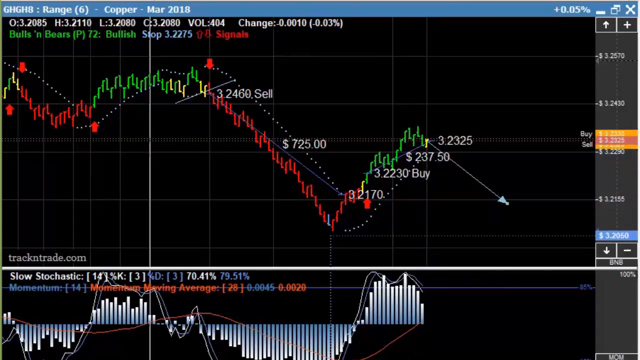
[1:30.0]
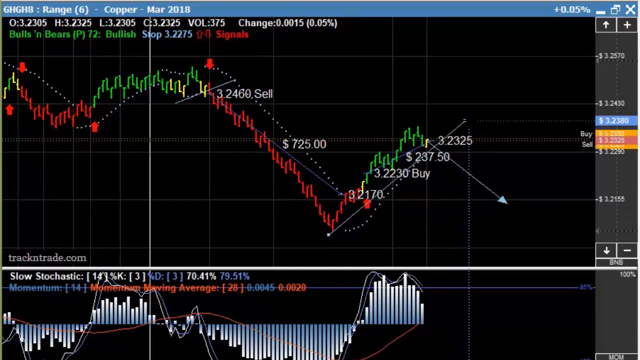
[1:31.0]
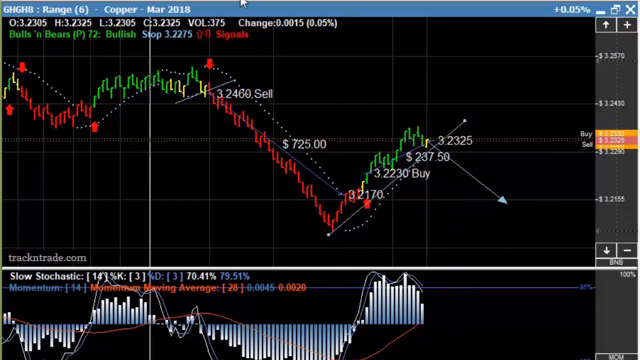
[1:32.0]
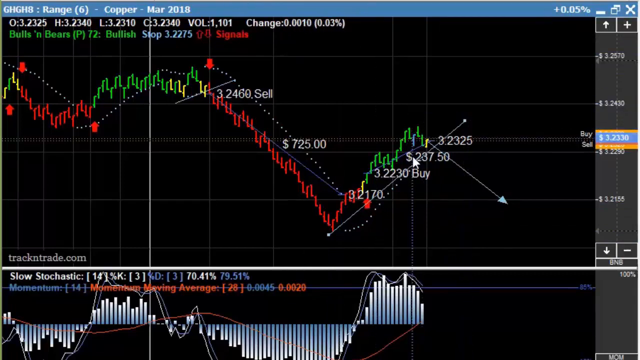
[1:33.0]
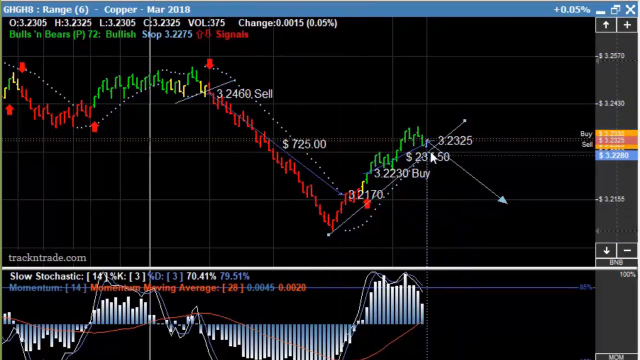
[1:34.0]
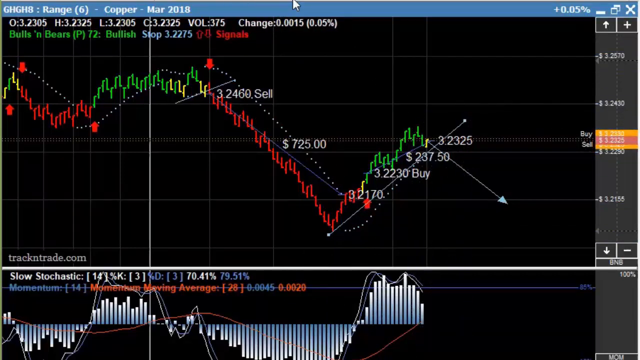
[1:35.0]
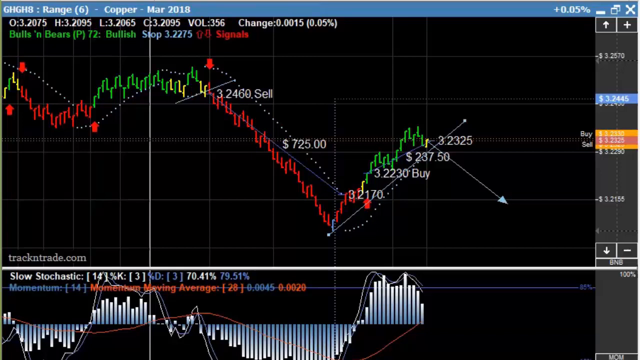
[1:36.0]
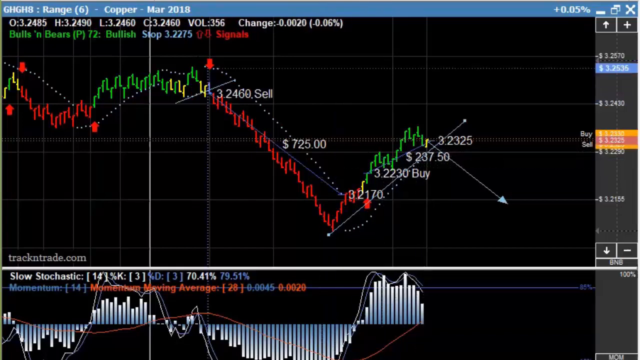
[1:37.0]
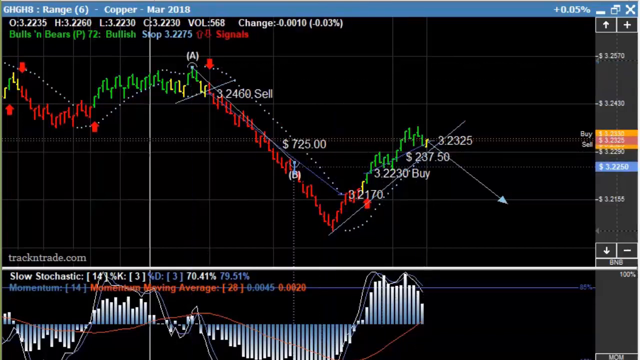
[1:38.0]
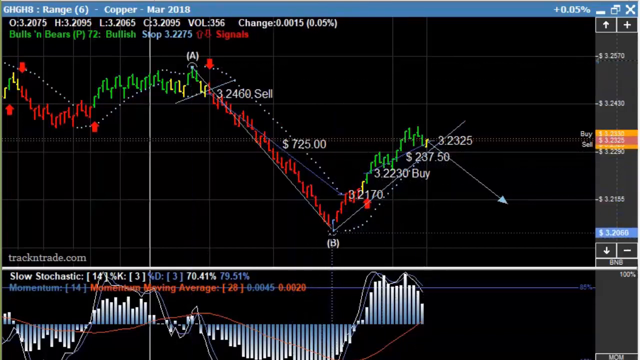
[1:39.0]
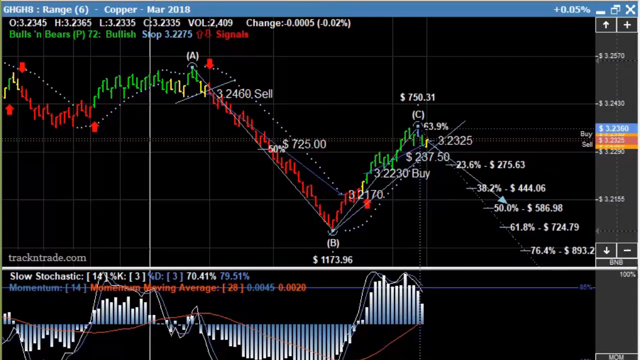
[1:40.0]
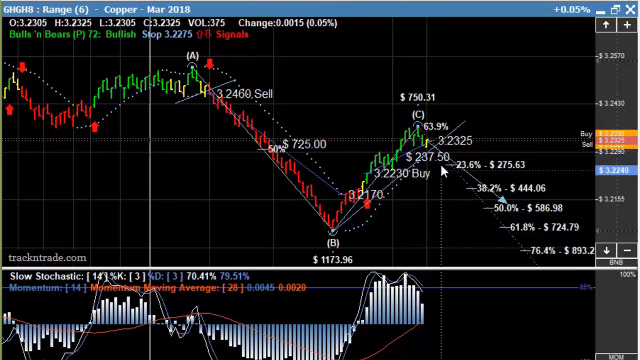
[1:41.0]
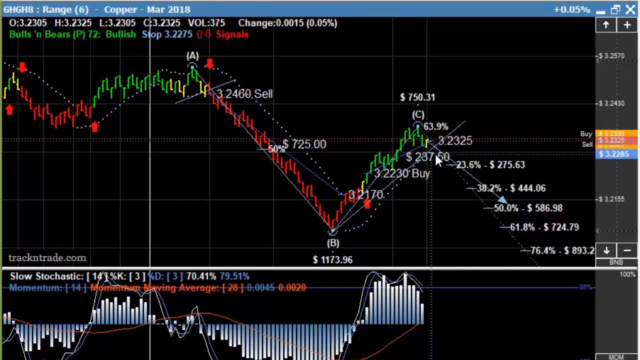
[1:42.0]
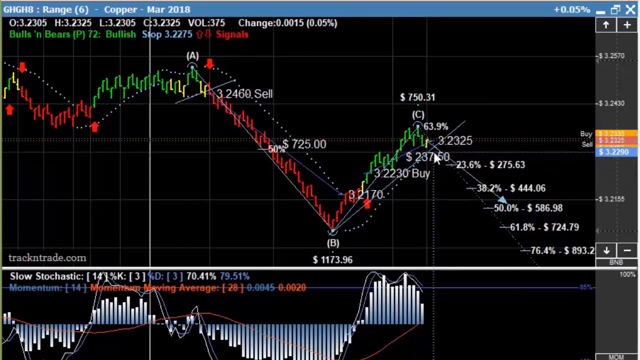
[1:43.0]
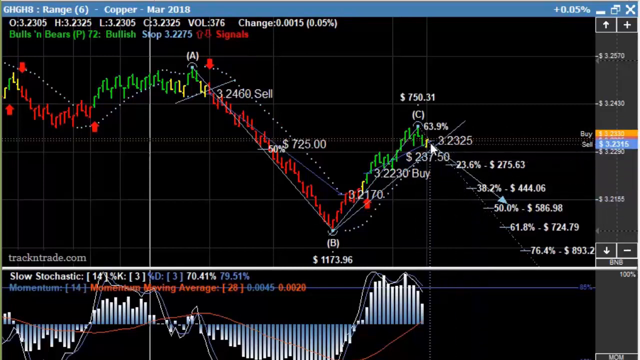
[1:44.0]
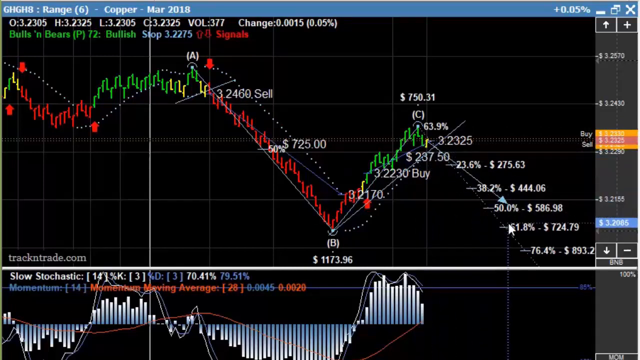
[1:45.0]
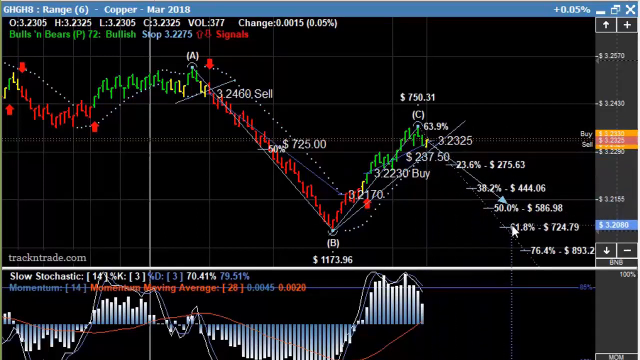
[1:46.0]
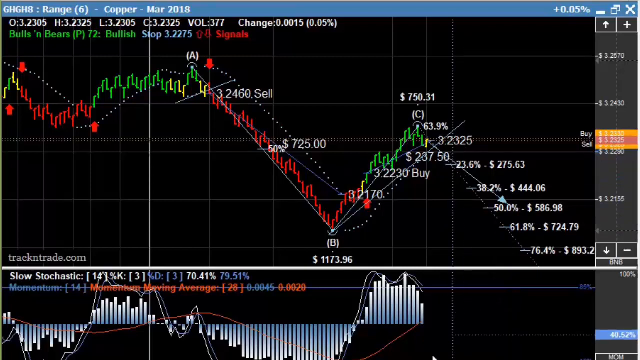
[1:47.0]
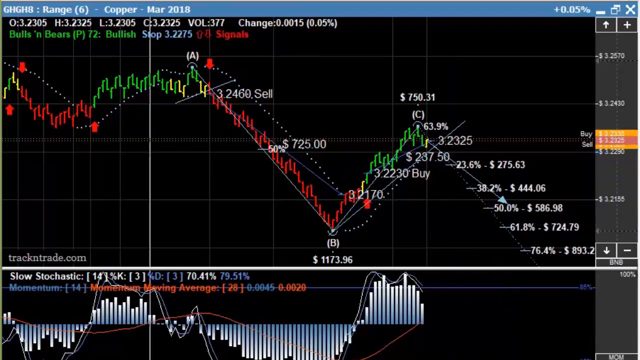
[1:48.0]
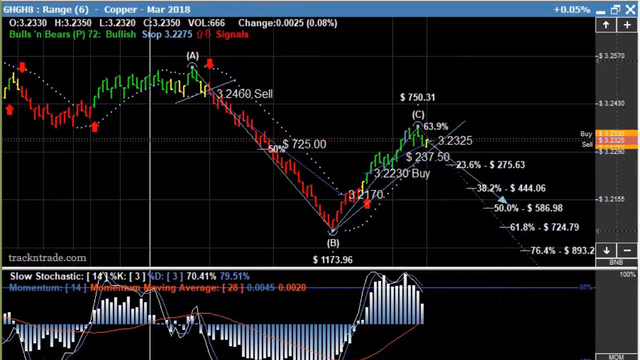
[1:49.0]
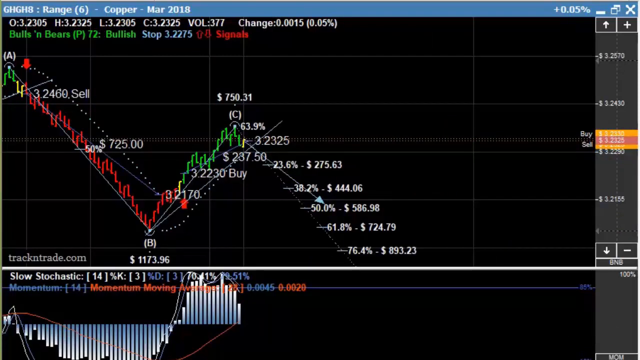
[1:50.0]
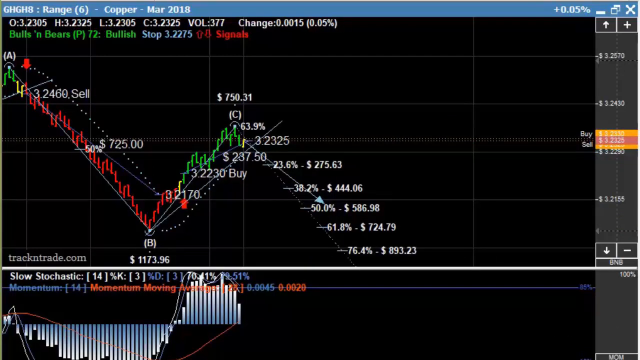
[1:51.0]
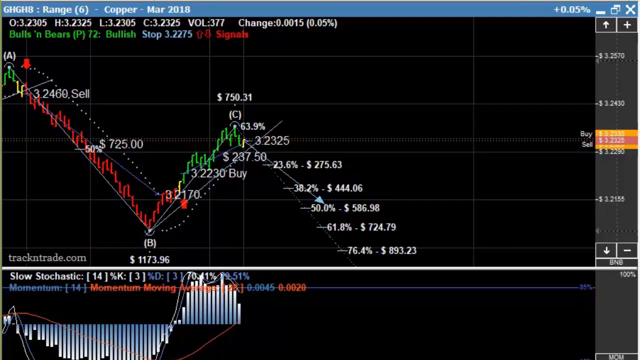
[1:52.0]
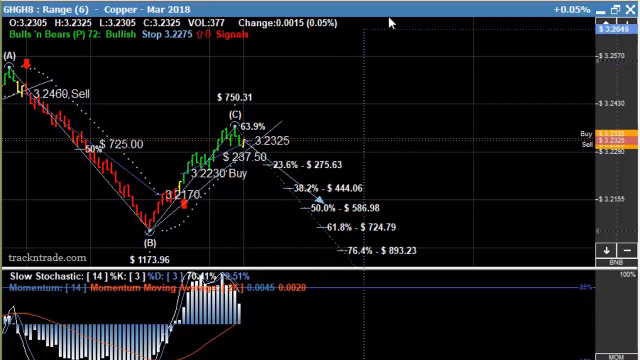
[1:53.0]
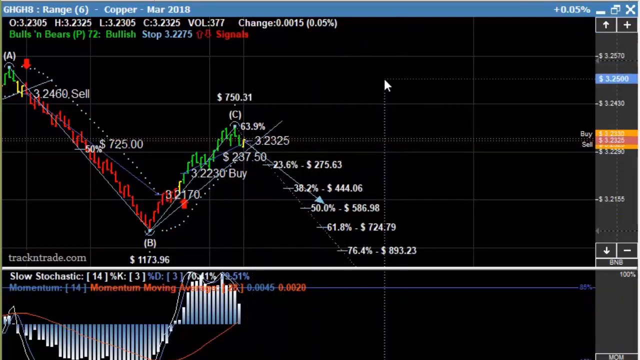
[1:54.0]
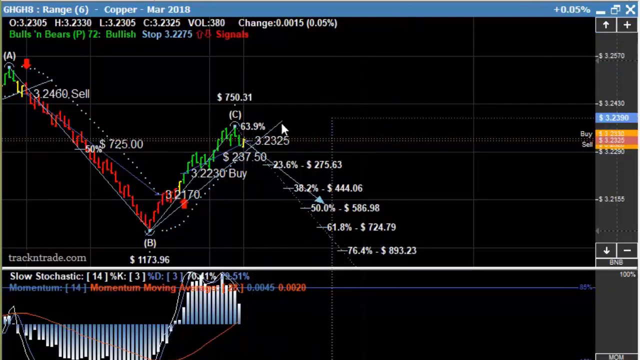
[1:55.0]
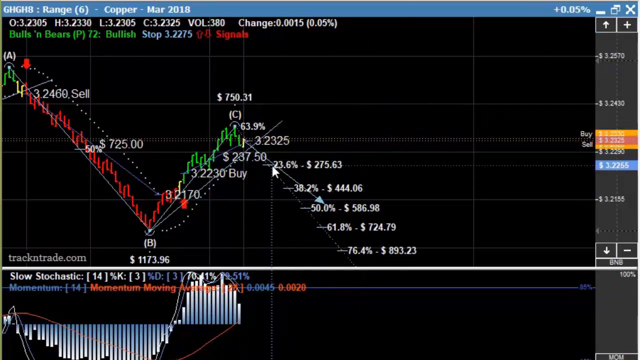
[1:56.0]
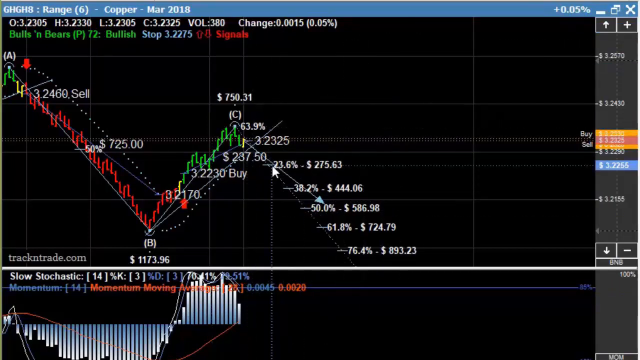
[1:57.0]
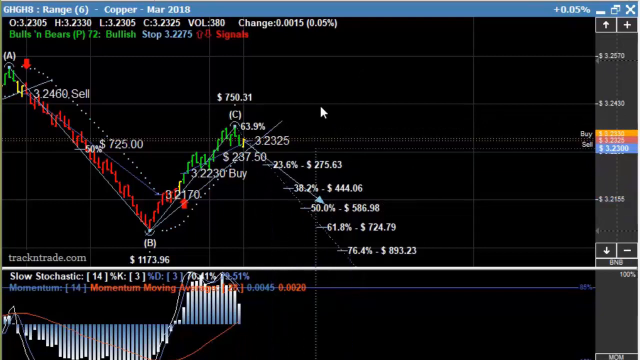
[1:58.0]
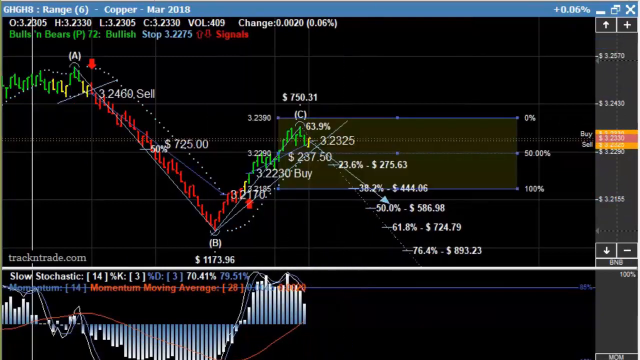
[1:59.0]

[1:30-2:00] The third line at the top is visible. It begins in green with "bulls N bears (P 72: bullish", then reads "stop 3.275" in blue, and in red there are a couple of symbols and the word "signals". Red arrows point up and down along the monetary graph. The mouse begins tracking data lines along the graph, with corresponding movement up and down the right side of the screen. The mouse is clicked, and another staircase of number values appears and is moved by the mouse. From the top it reads "63.9%", then "32325", then "-21.6%" with "$275.63", "38.2%" with "$444.06", and "50.0%" with "$586.98". The next figure cannot be read because the mouse is over it, followed by "$724.79", and stepping down, "76.4%" with "$893.2"; the rest of that value is hidden behind the gray bar.